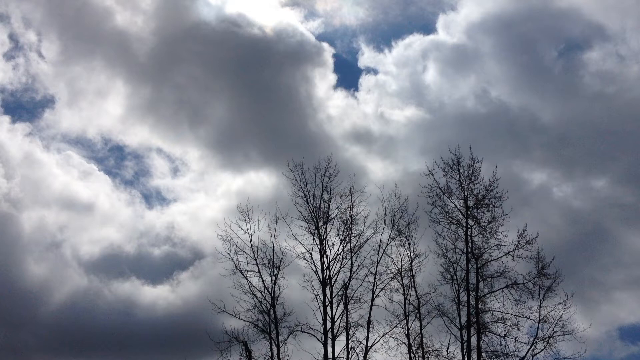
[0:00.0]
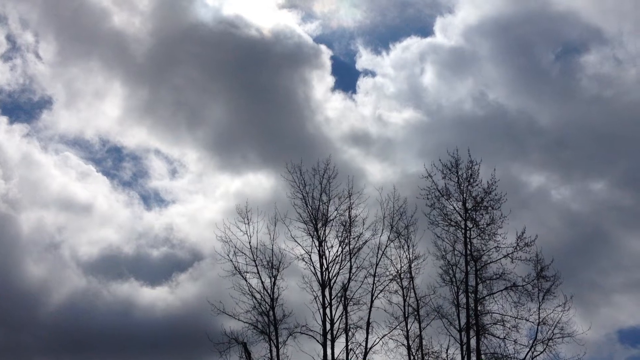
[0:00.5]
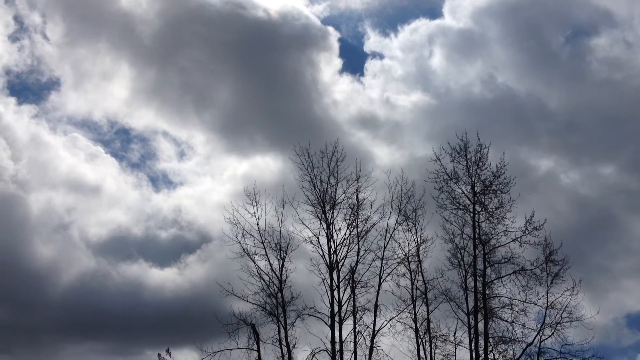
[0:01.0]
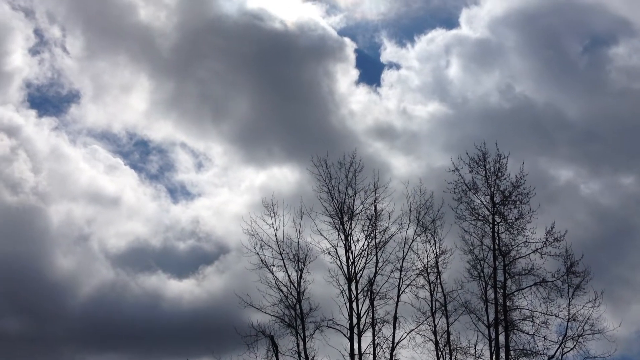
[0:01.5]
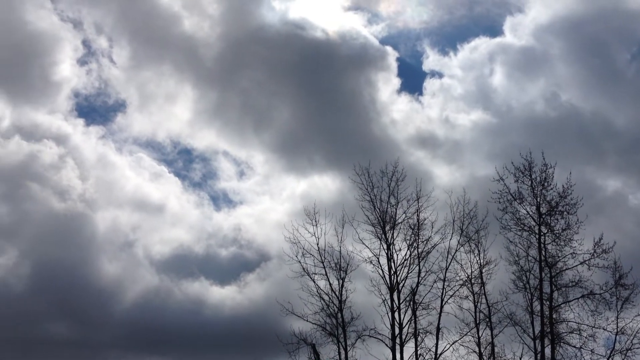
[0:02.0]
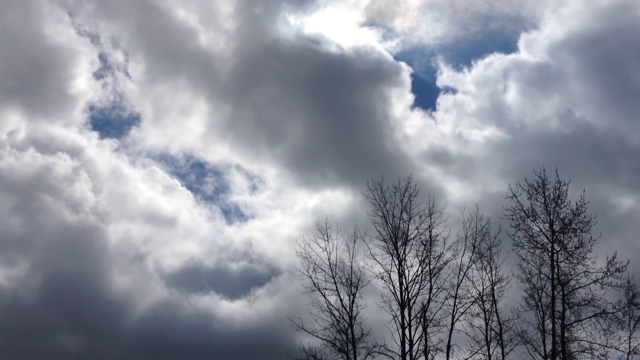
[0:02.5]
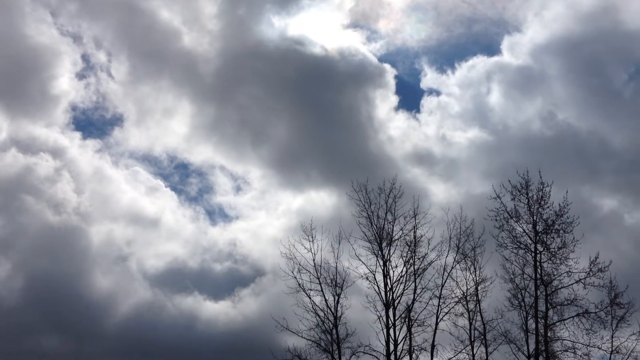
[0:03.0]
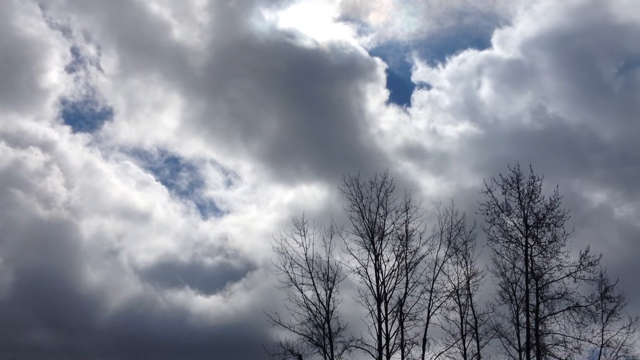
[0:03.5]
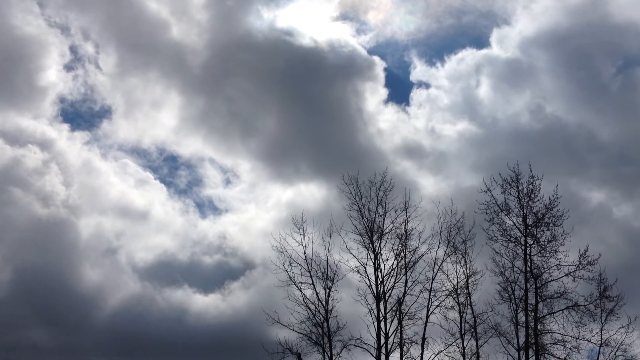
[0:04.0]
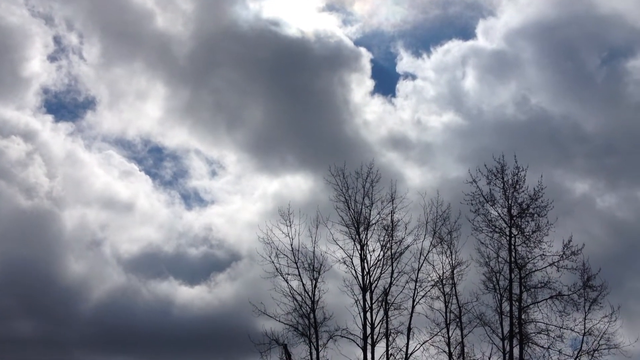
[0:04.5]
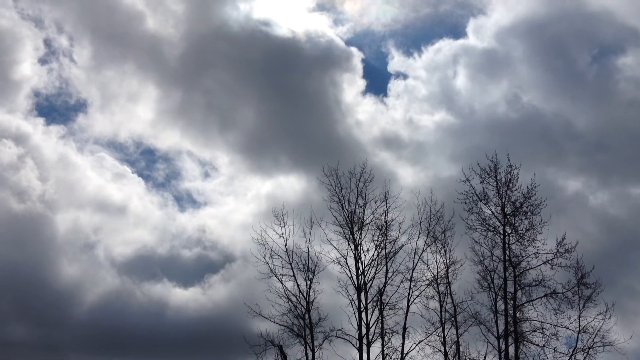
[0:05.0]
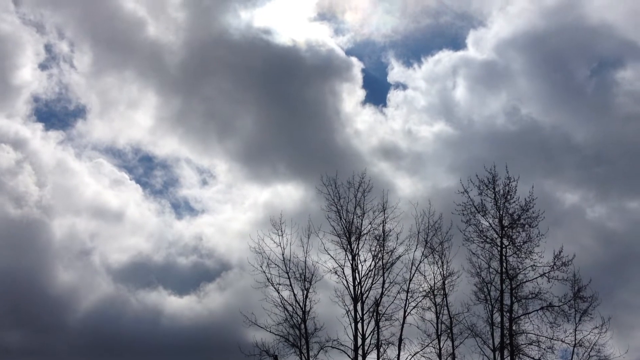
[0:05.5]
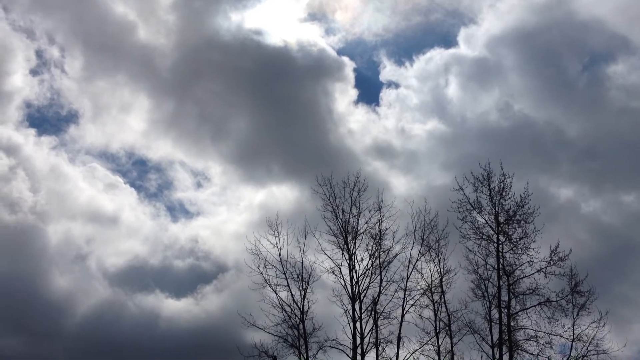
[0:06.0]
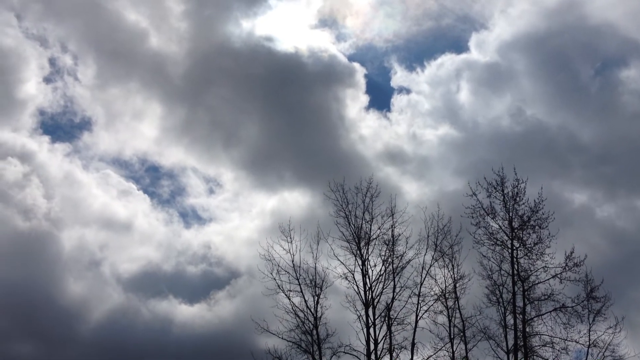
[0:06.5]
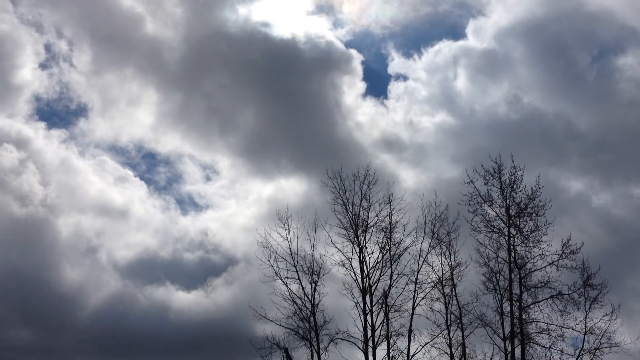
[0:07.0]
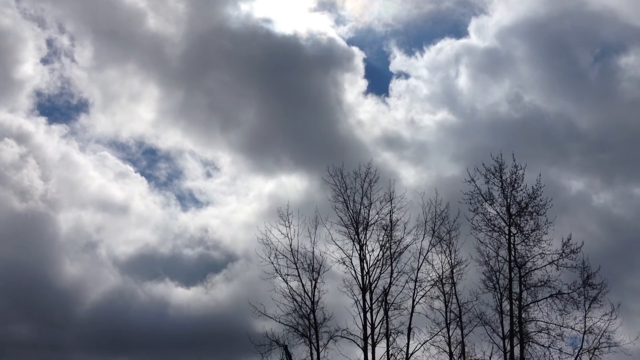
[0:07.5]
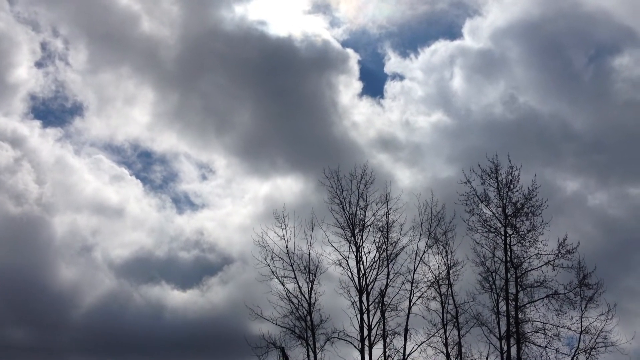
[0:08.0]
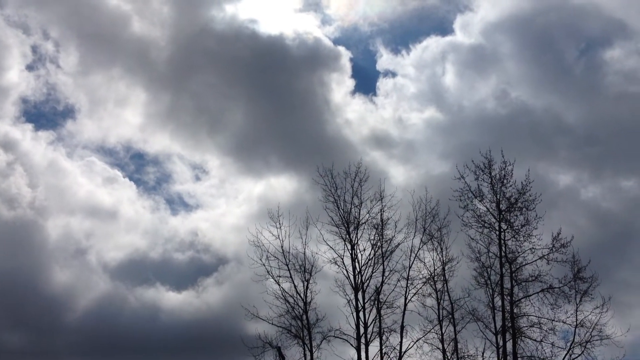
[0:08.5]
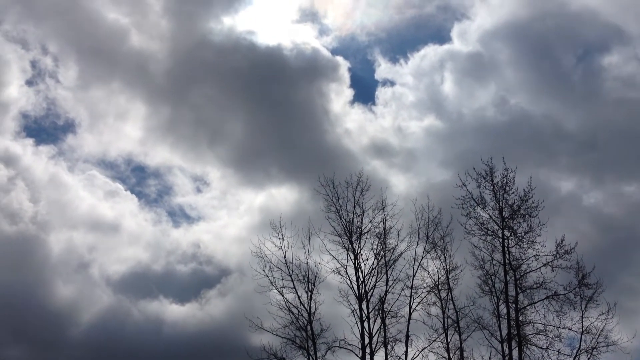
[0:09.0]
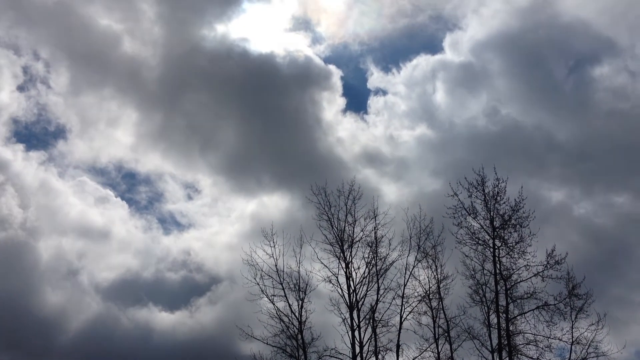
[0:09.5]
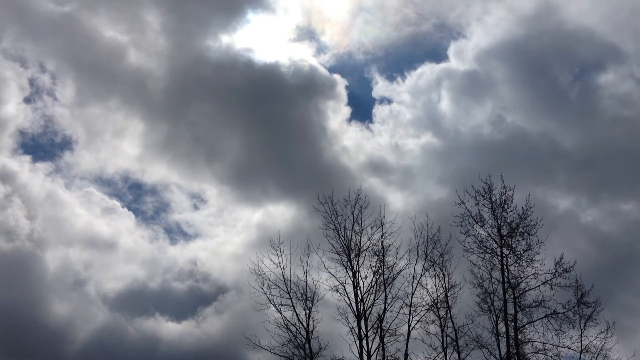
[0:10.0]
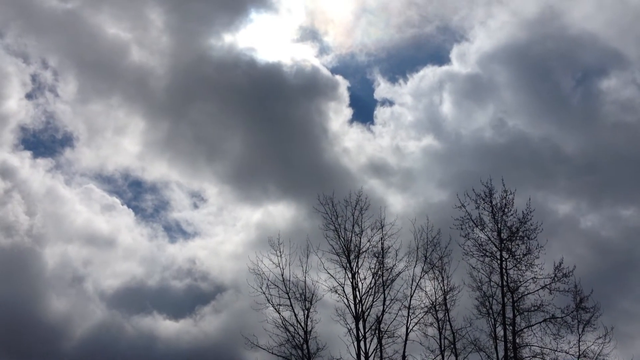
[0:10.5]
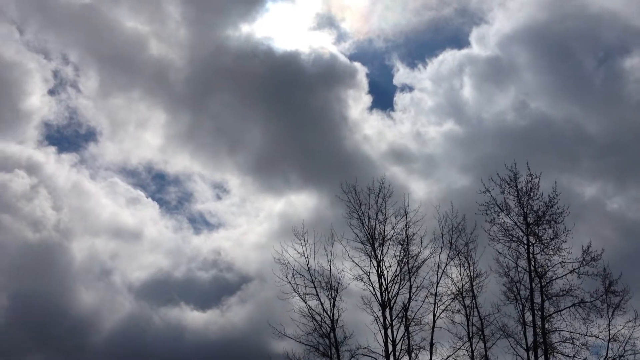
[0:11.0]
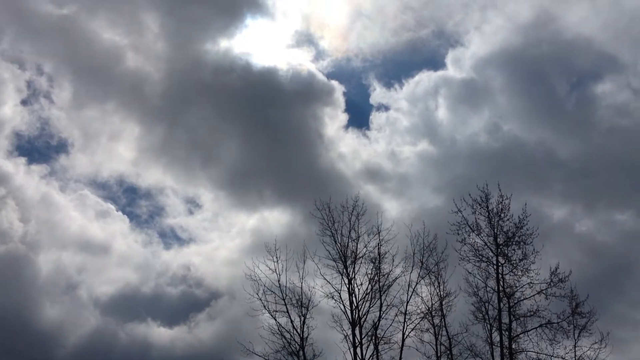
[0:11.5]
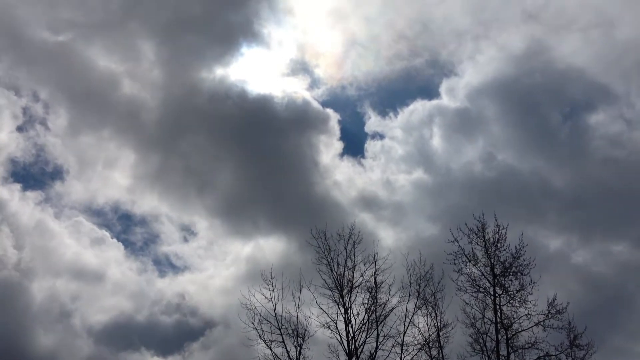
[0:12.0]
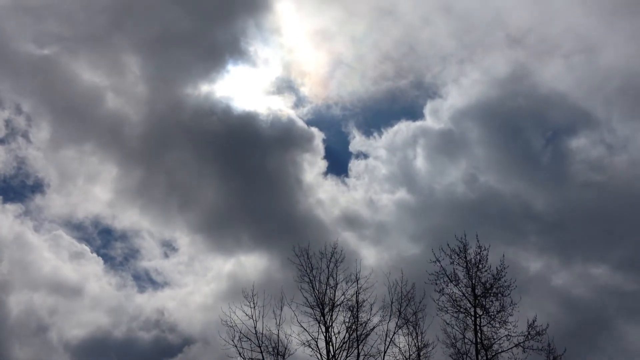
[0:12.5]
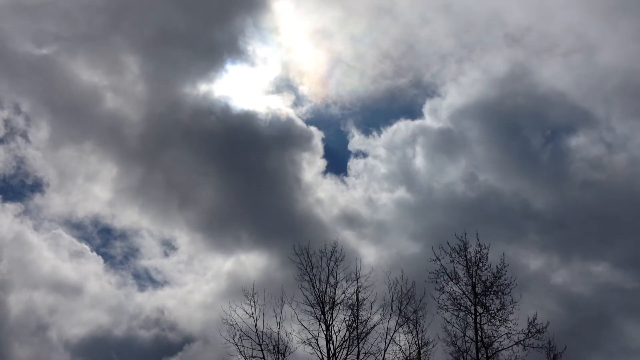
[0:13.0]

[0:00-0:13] Someone films clouds moving across the sky. The sky behind the clouds is a deep blue, and the clouds are largely white on their back side, while their undersides are very dark gray, so they look like they could be turning into storm clouds. The sun shines brightly in the center to the left, behind the clouds. It appears to be fall, since the leaves in the trees are all falling out.